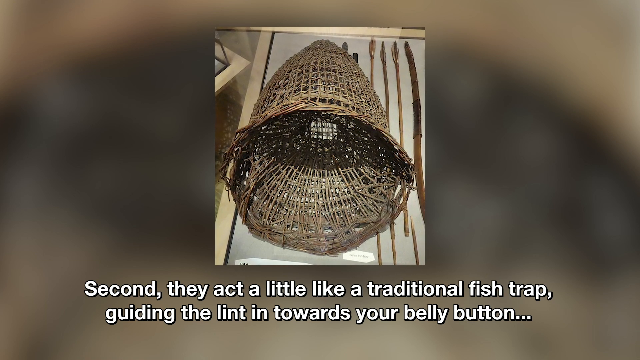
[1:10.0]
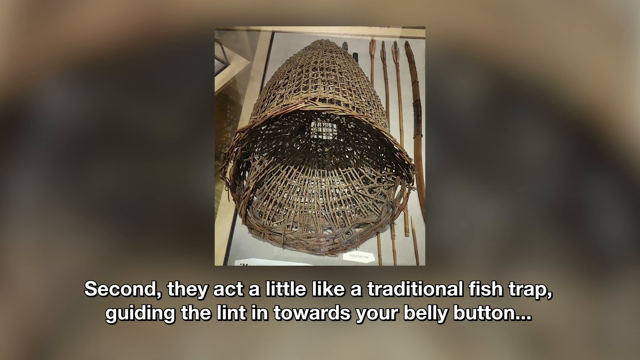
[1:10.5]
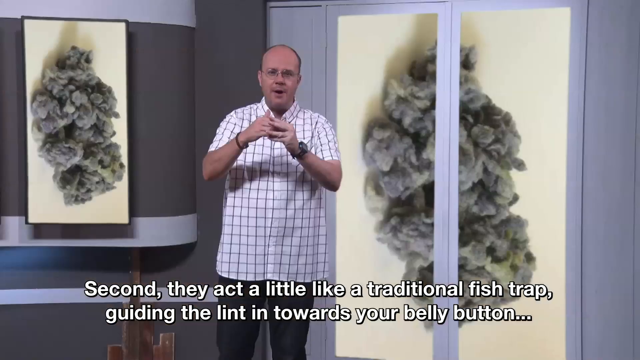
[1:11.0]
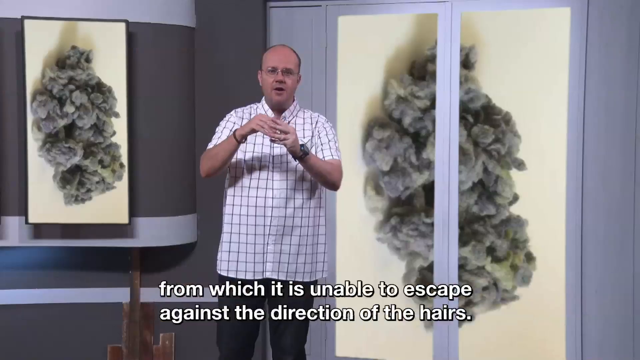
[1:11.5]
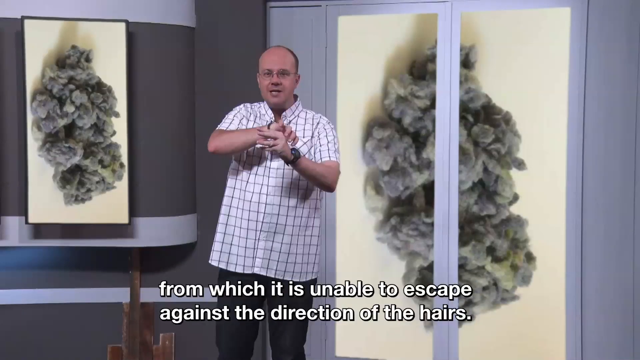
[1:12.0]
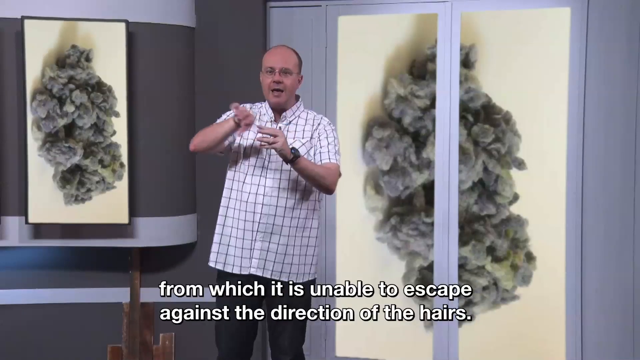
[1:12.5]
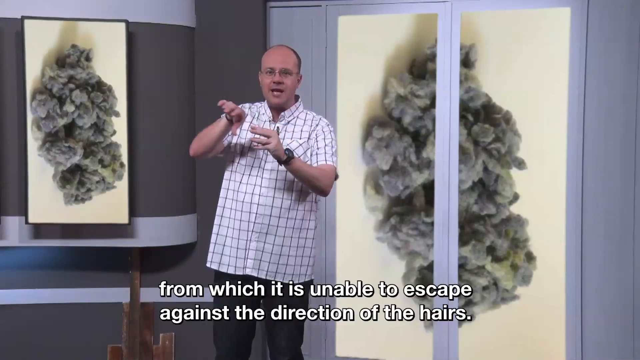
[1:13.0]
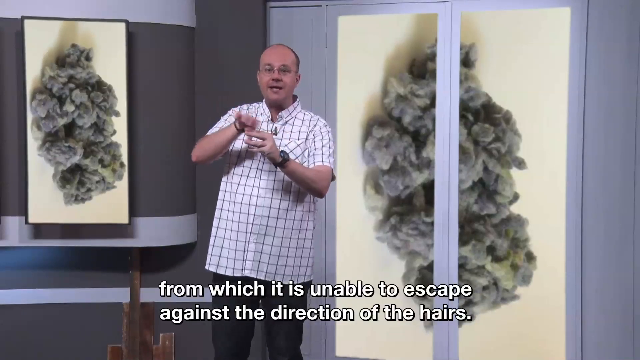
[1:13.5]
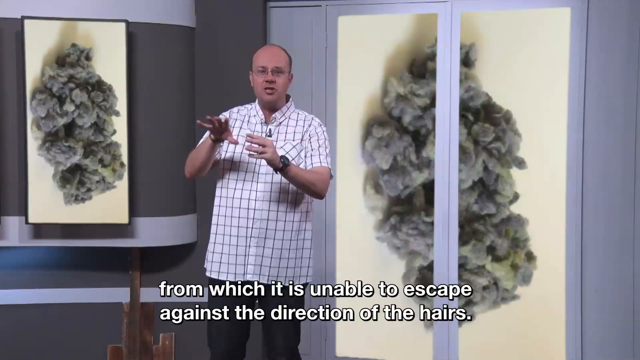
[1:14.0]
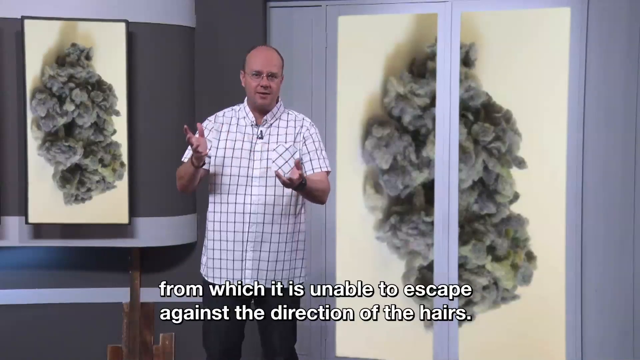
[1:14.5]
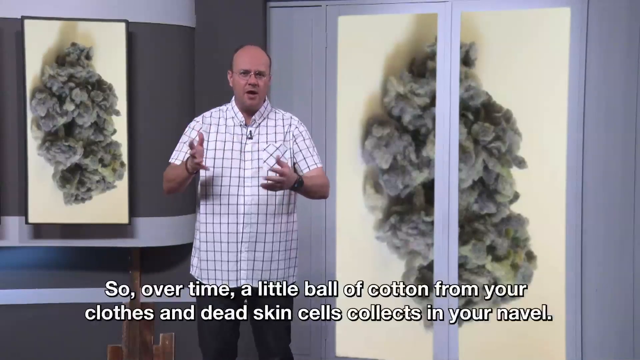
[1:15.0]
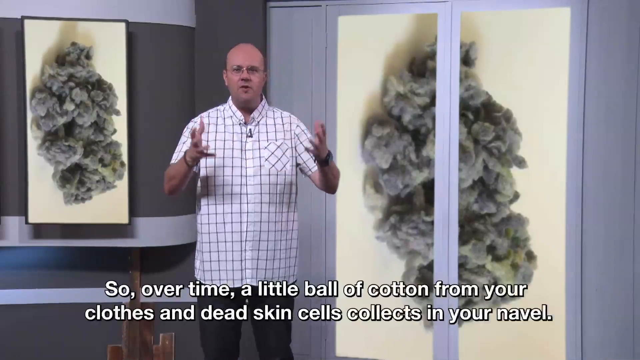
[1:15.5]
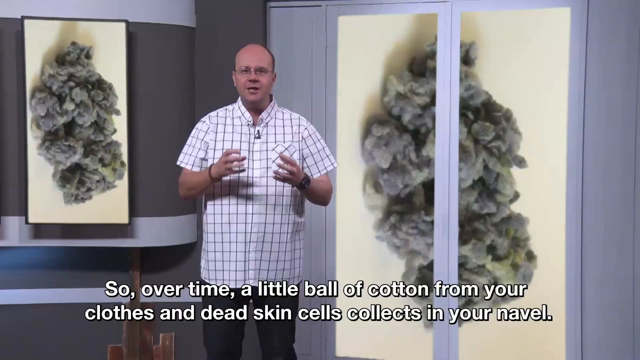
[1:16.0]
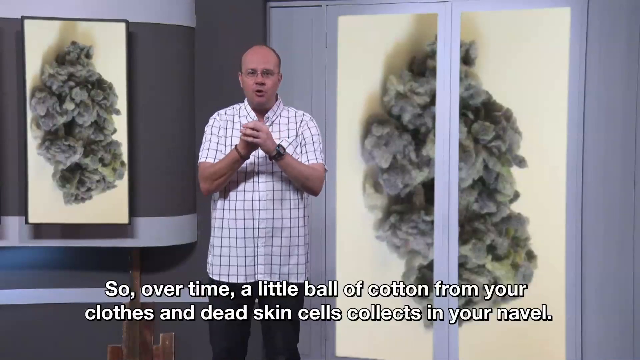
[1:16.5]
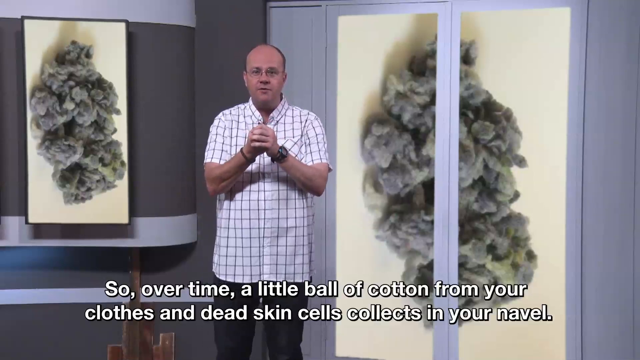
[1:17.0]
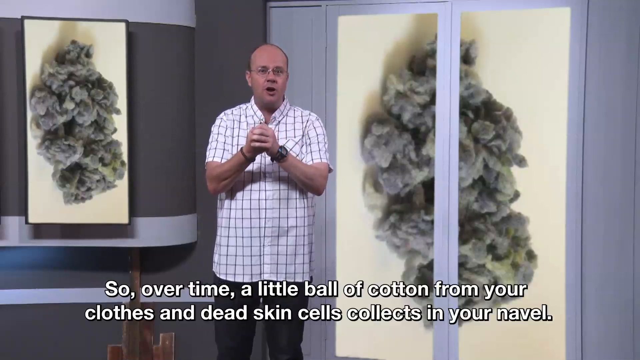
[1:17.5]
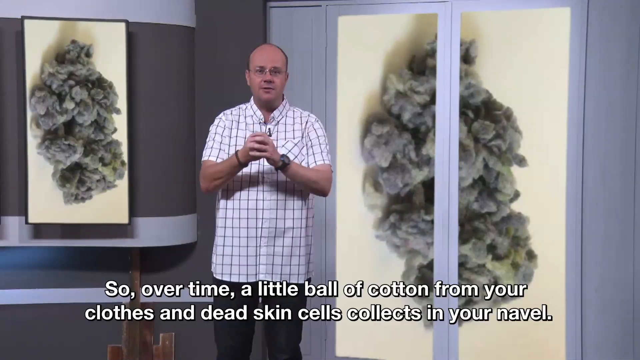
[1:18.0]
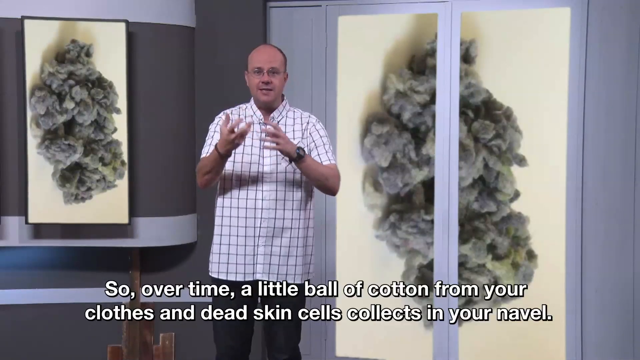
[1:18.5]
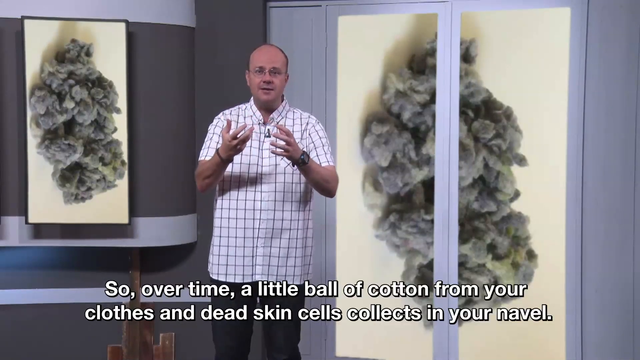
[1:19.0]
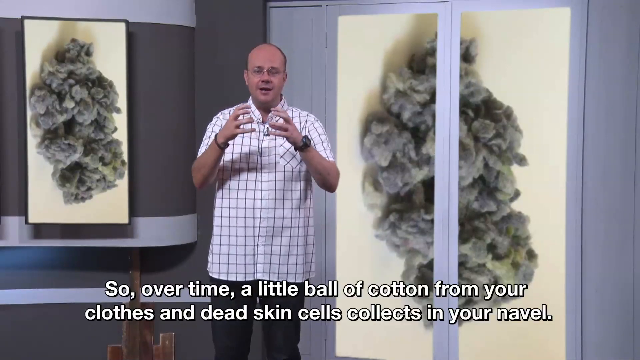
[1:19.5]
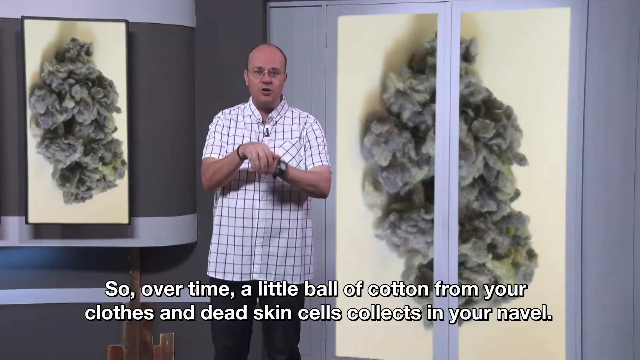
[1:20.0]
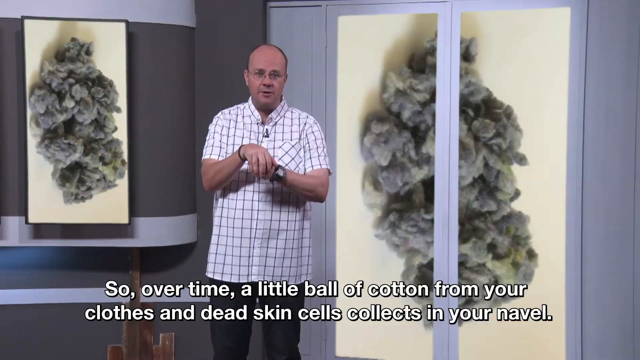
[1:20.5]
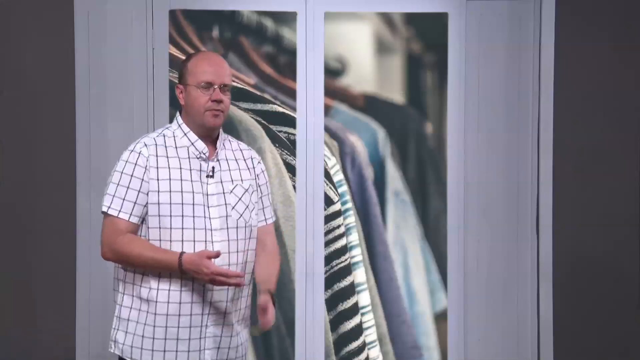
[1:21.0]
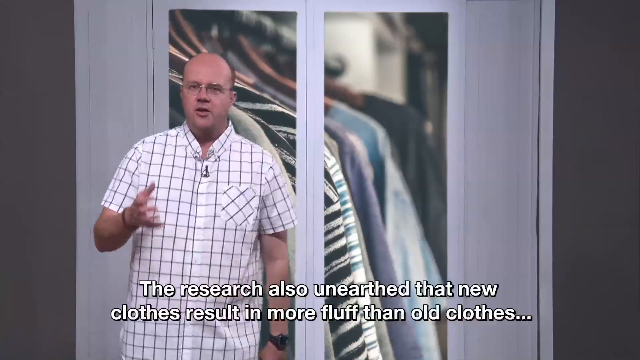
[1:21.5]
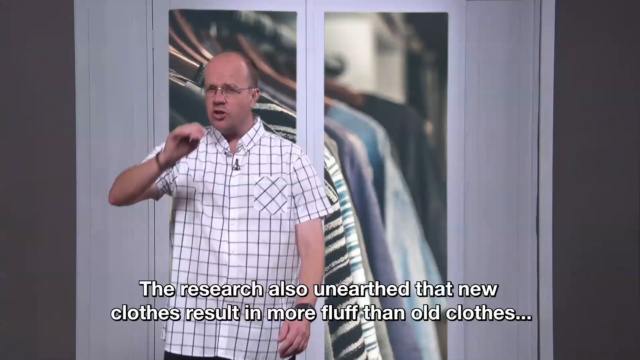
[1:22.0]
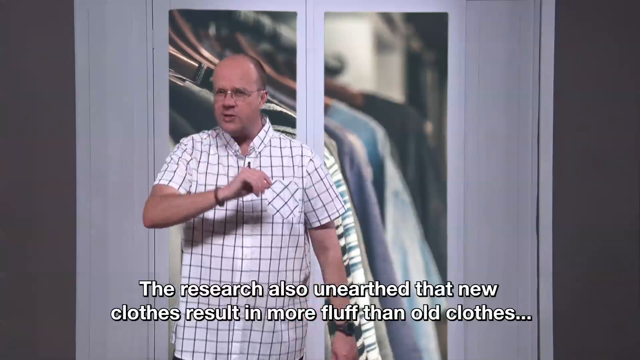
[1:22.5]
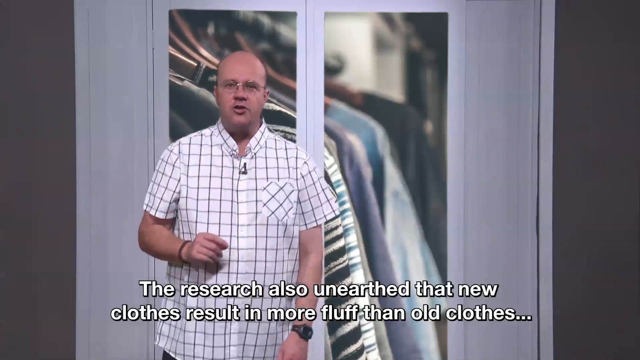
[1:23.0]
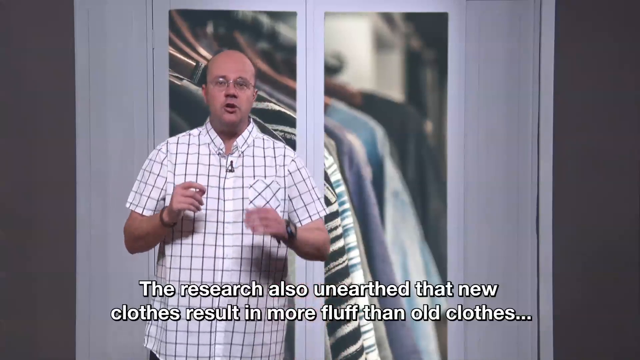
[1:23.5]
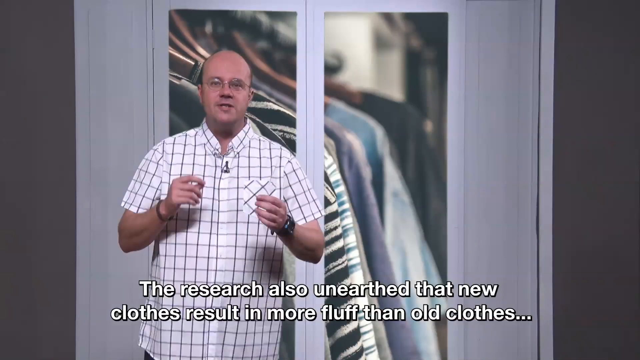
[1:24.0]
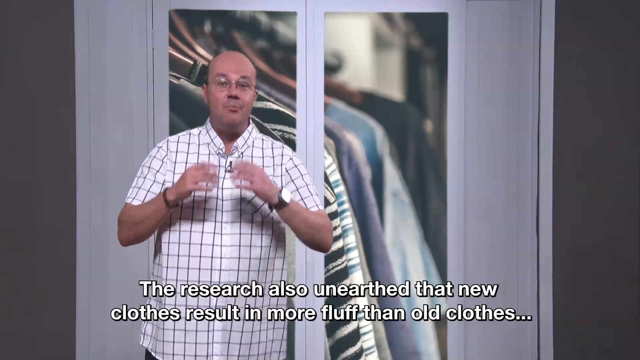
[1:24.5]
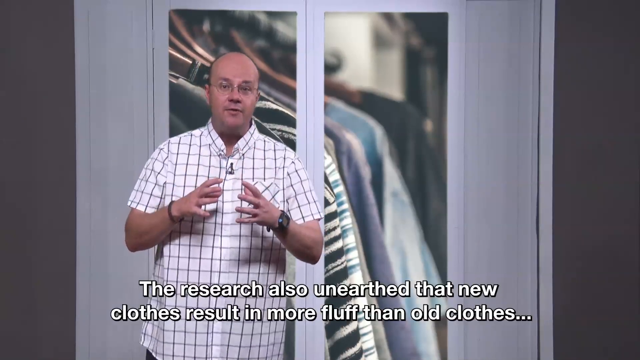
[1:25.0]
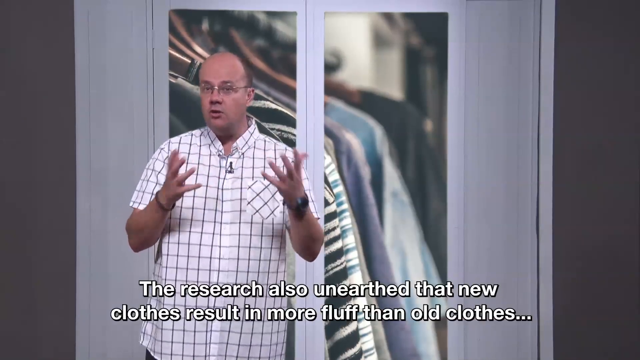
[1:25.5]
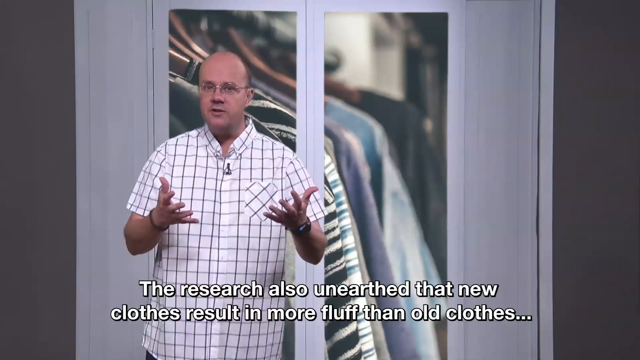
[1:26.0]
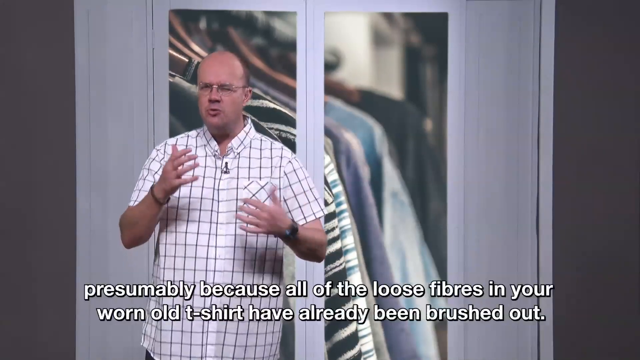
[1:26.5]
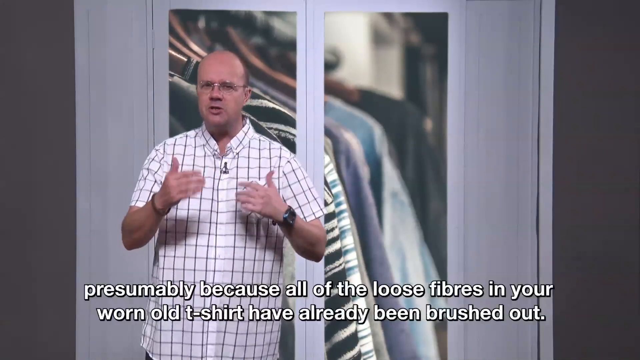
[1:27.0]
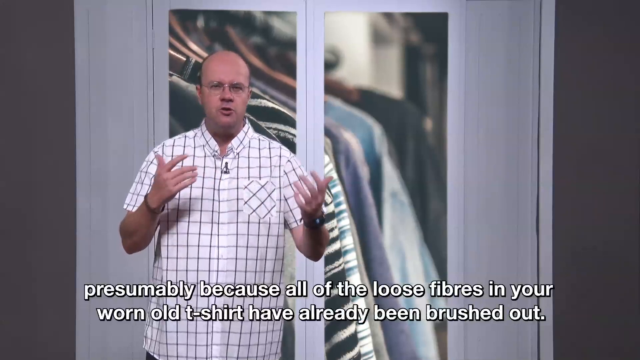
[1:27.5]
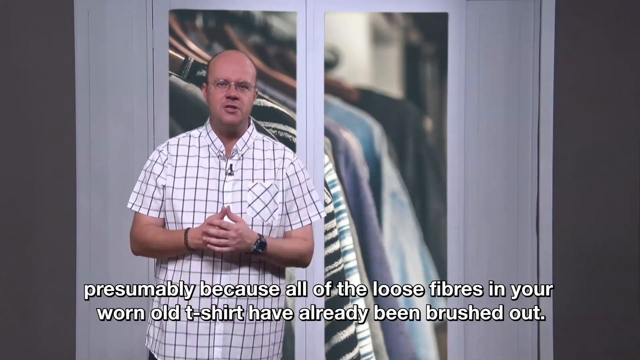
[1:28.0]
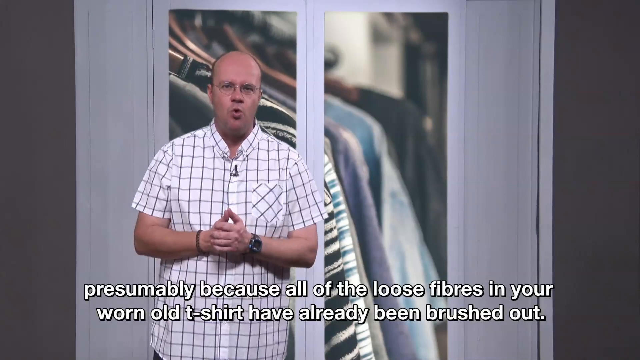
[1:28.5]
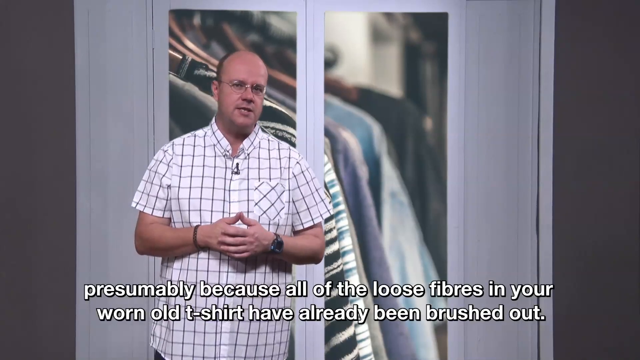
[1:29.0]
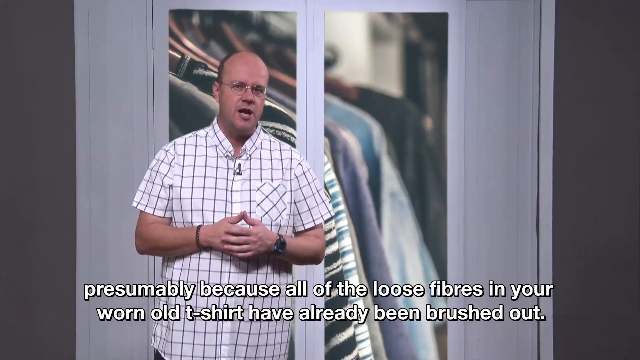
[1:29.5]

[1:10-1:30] The explanation of belly button lint continues, with text reading: "from which it's unable to escape against the direction of the hairs. So over time, a little ball of cotton from your clothes and dead skin cells collects in your navel. The research also unearthed that new clothes resulted in more fluff than old clothes. Presumably because all the loose fibers on your worn out t-shirt have already been brushed out."